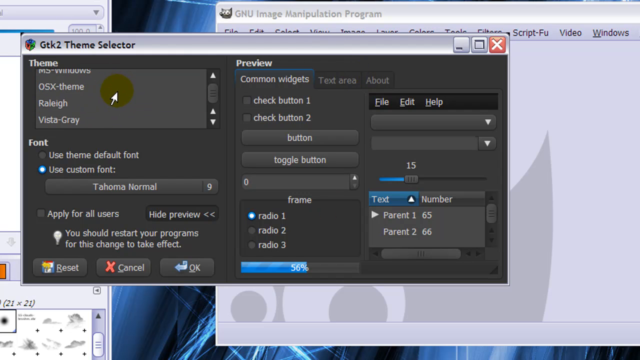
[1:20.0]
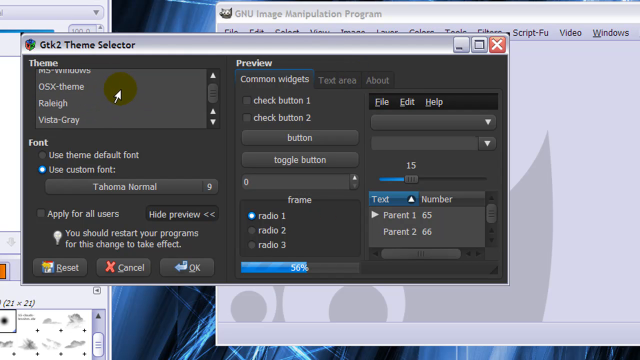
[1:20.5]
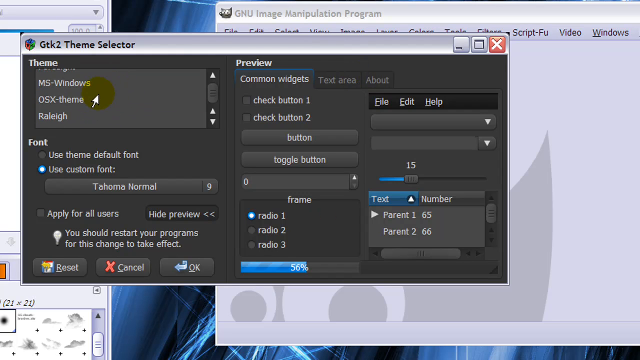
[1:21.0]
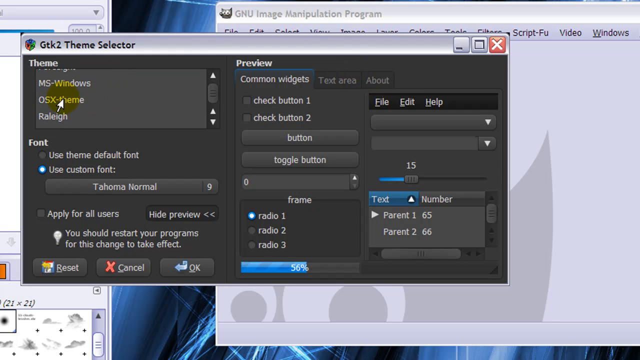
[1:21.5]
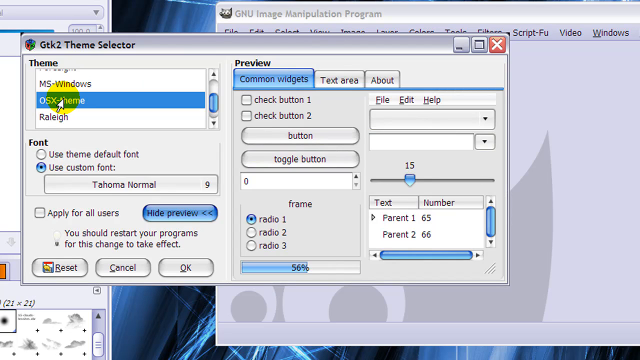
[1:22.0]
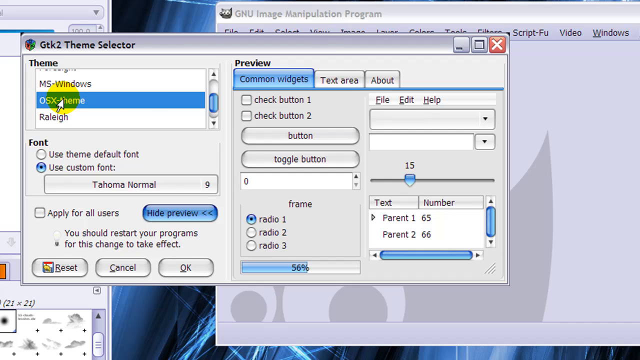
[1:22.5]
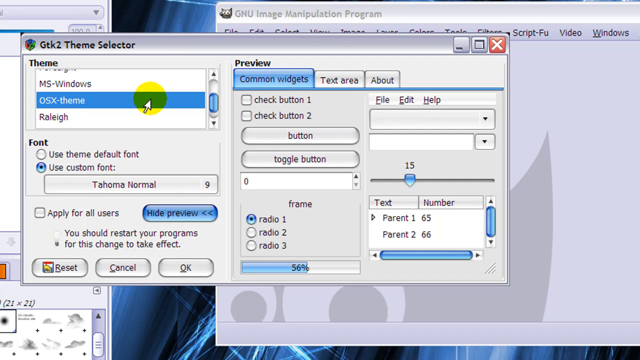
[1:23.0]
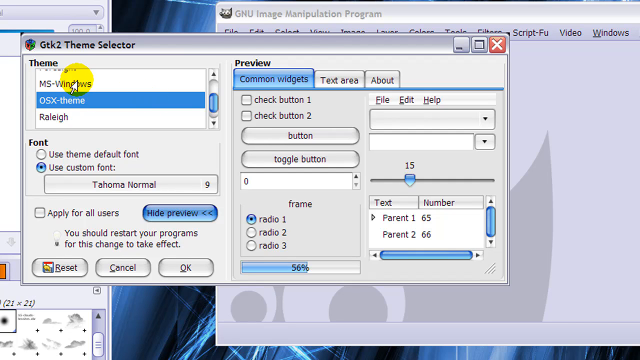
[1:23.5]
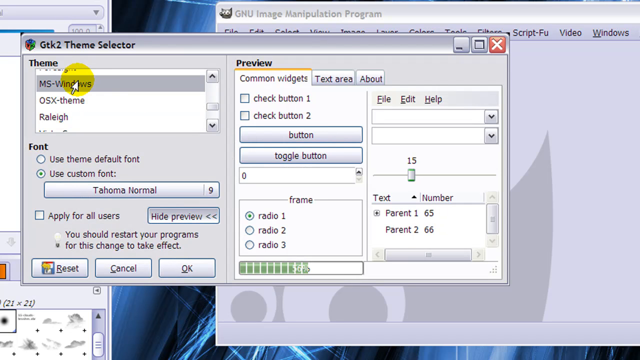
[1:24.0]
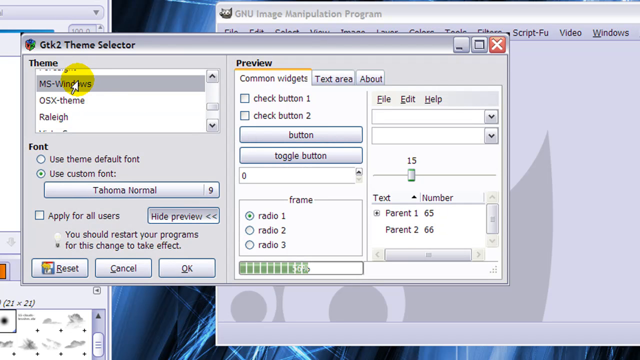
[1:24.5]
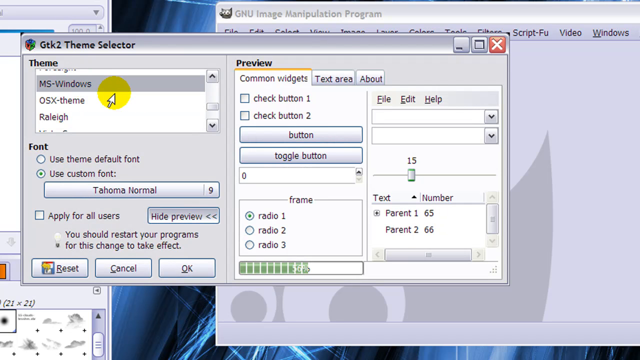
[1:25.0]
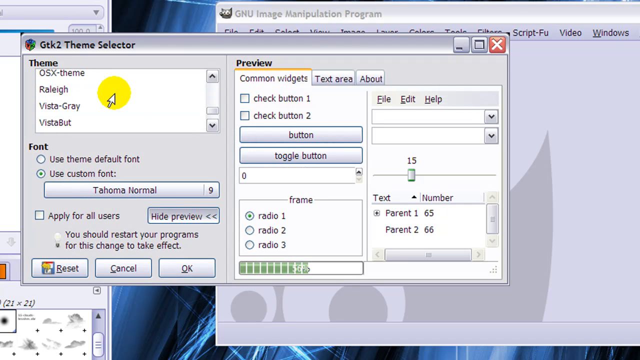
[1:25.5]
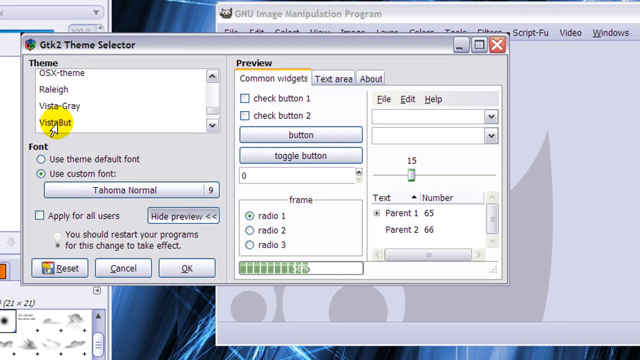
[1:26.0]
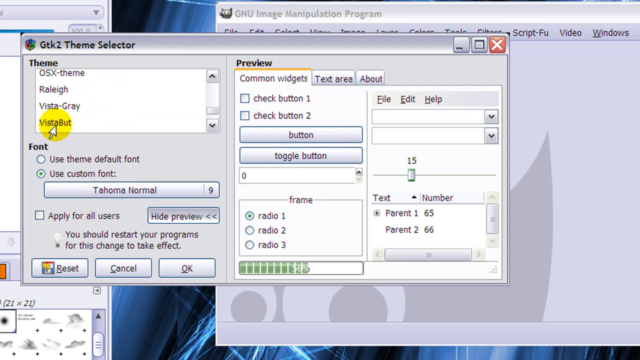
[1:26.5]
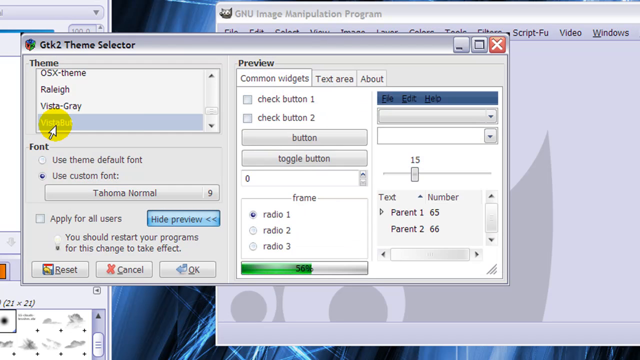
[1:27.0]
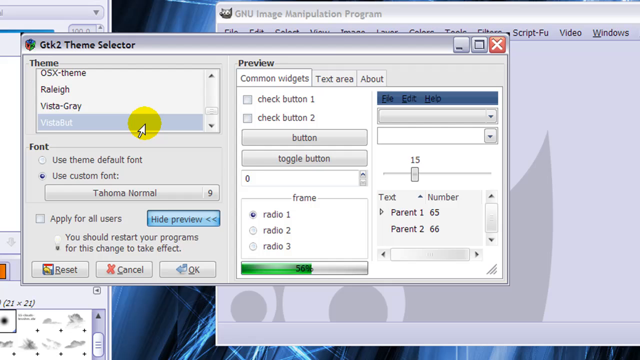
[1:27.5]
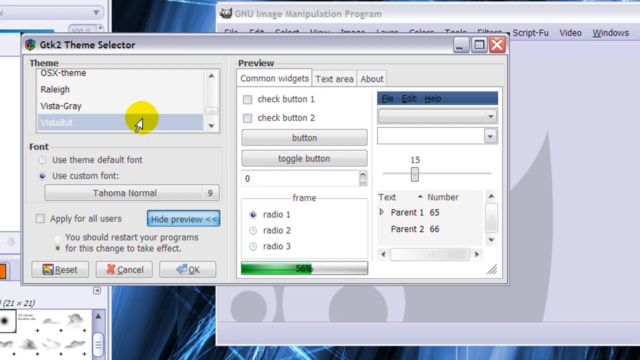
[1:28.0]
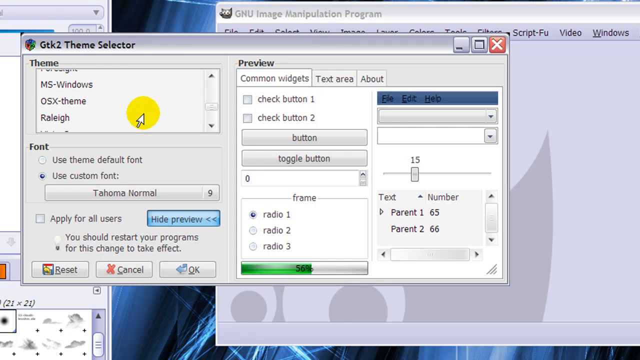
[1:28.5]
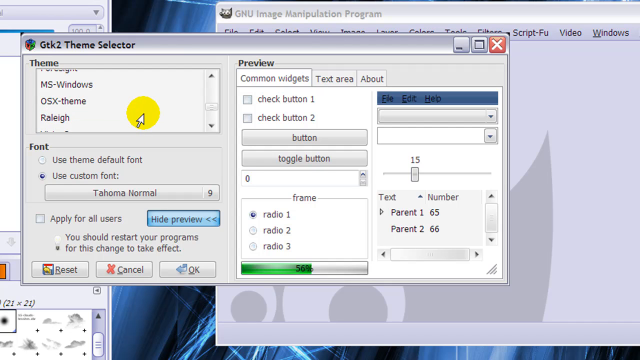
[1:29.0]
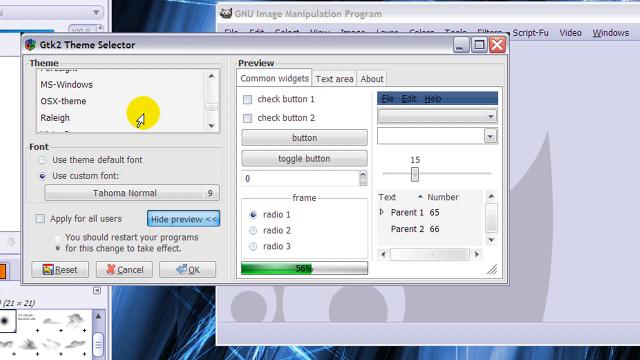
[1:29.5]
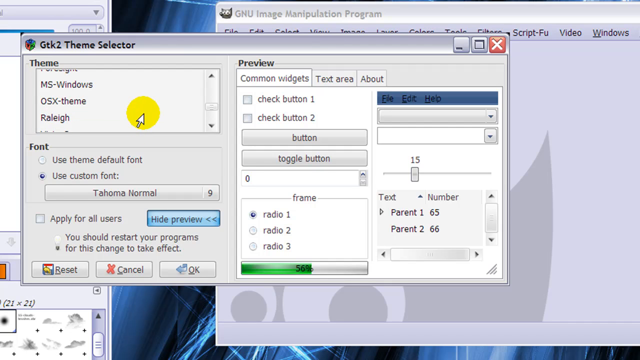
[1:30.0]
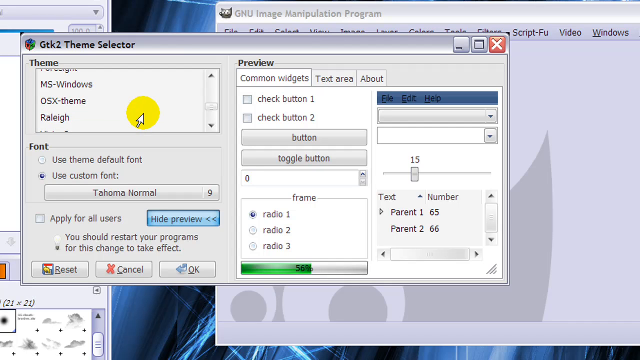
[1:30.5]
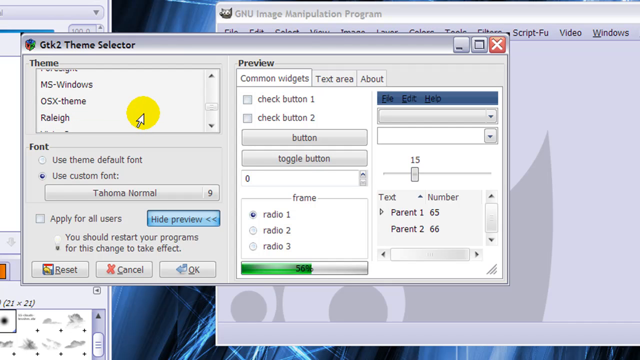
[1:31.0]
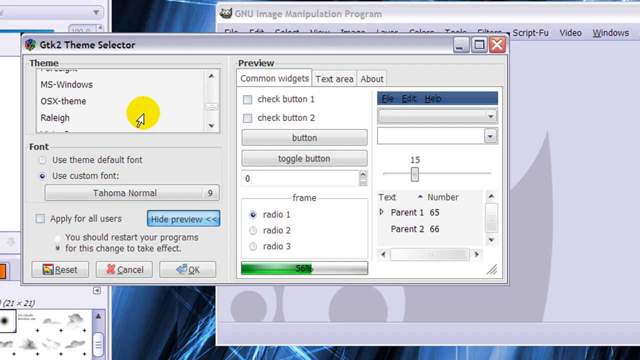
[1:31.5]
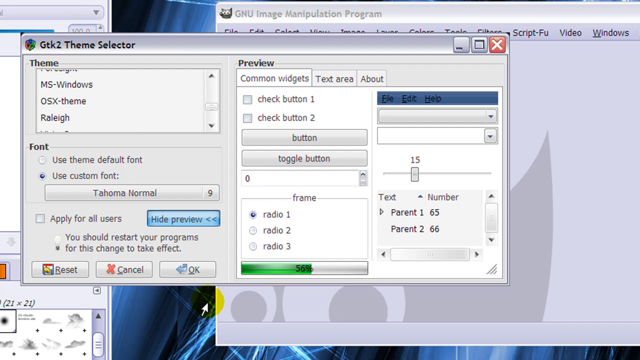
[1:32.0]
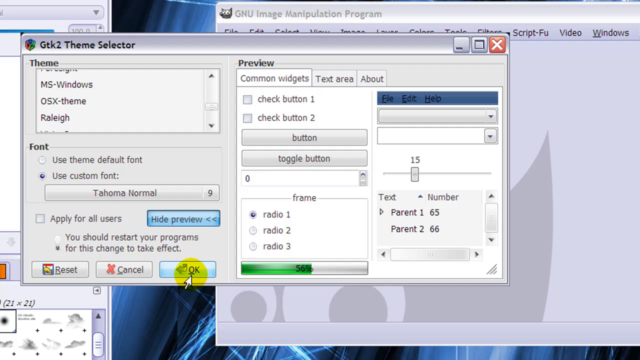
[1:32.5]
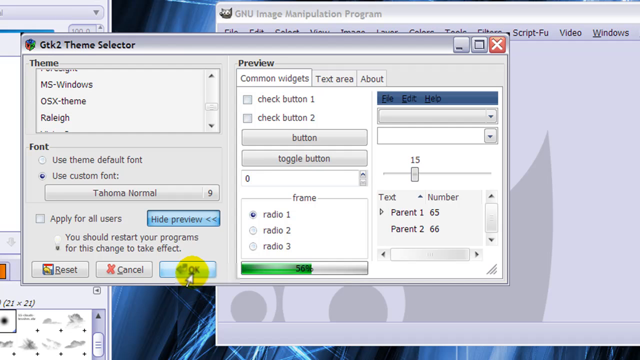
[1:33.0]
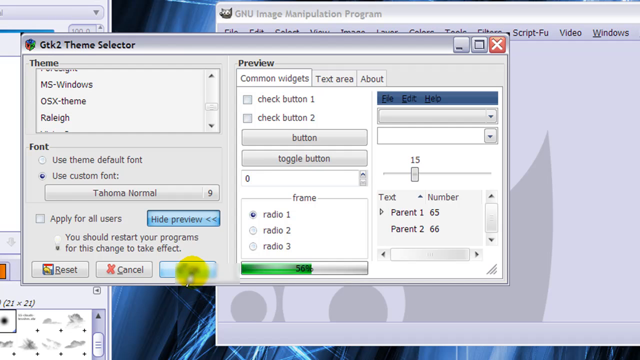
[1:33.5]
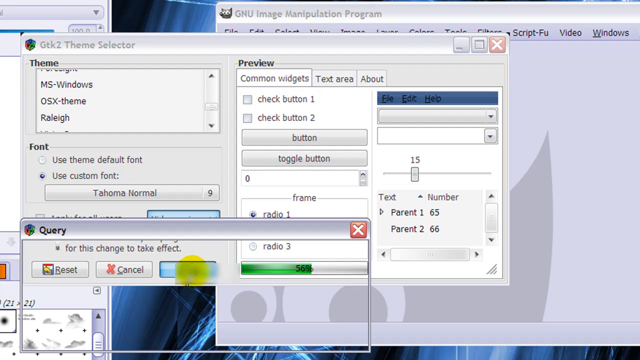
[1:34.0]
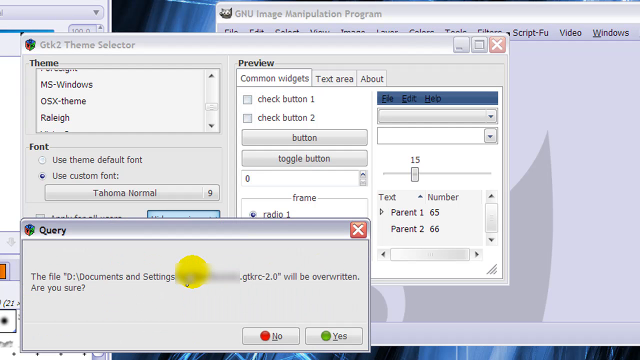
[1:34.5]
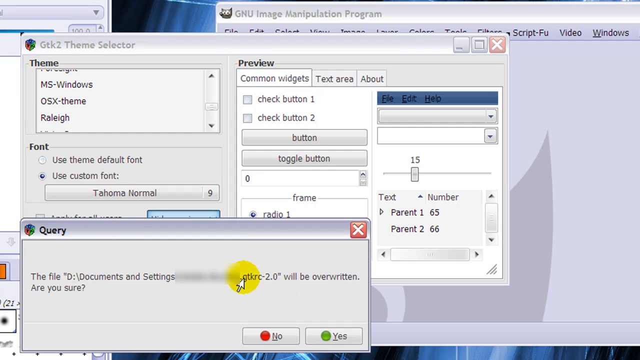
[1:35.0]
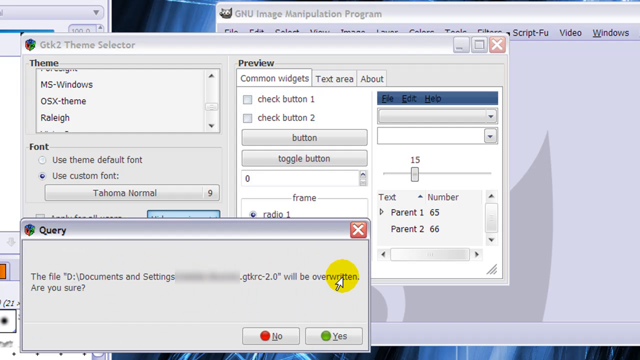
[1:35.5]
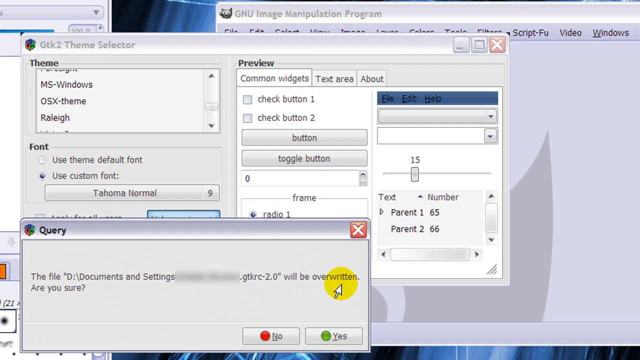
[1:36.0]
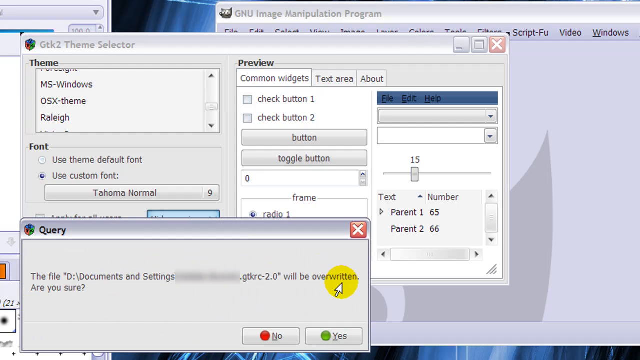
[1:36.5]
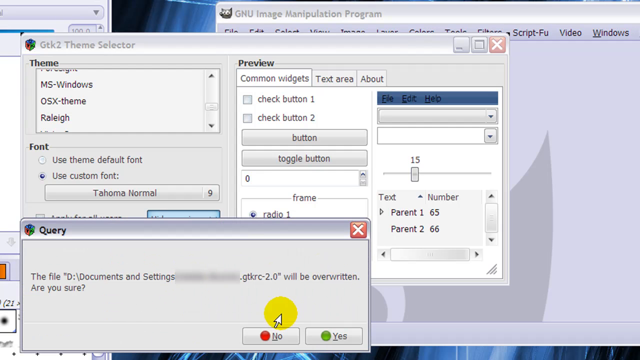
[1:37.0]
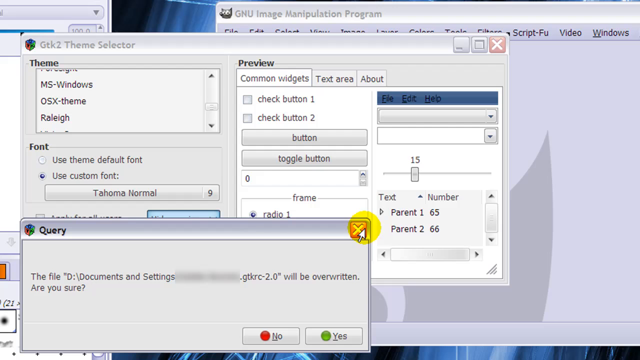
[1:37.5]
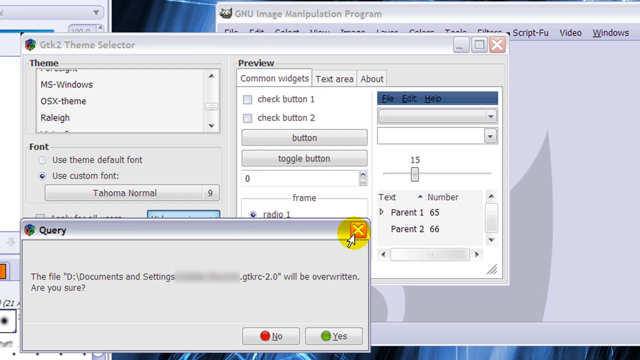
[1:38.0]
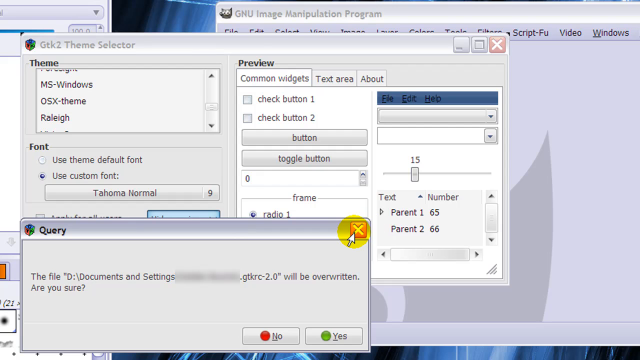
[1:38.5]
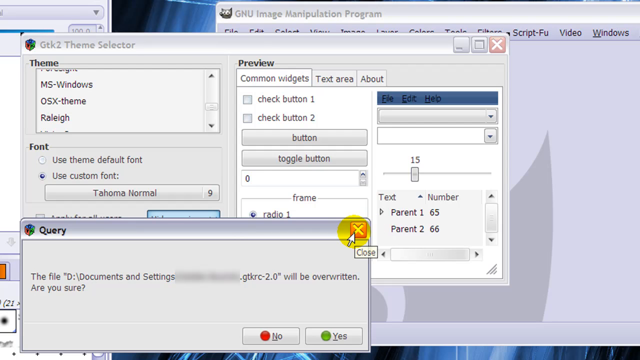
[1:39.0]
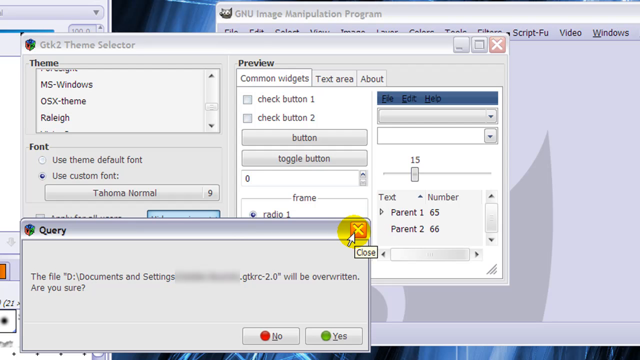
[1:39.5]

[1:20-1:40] Someone interacts with a menu window called GTK2 Theme Selector, shown in gray with light gray borders. They scroll through a box labeled "Theme" with multiple lines of white text. Selecting a theme named OSX-Theme changes the window's style to gray with a darker gray border. They mouse upwards and click MS-Windows, which gives the window a light gray background with white front elements. Scrolling further down, they click a theme listed as VistaBut, which makes the box more white with blue settings. The user moves the mouse down to an "Okay" button at the bottom of the window and clicks it. A new window labeled "Query" pops up, with text reading "the file D:/documents and settings", followed by blurred-out text, then "'.gtkrc-2.0' will be overridden. Are you sure?" with Yes and No options. The cursor hovers over the word "overridden", then the red X is clicked to close the window.